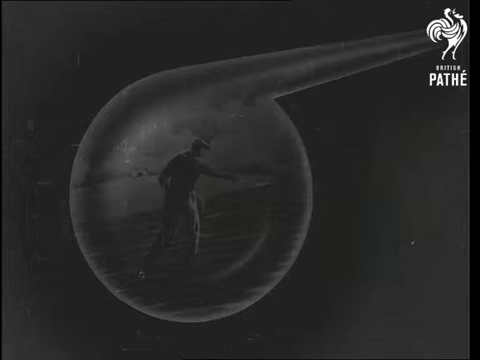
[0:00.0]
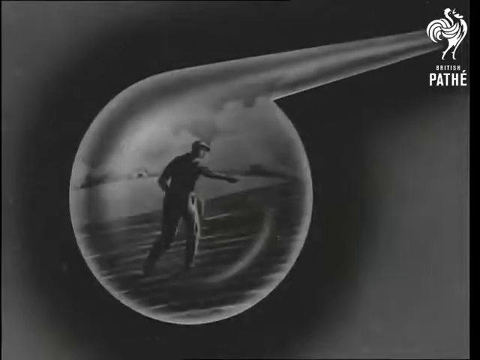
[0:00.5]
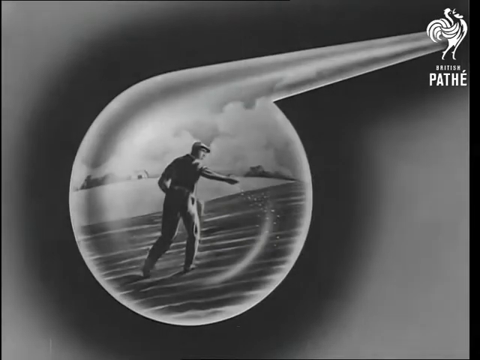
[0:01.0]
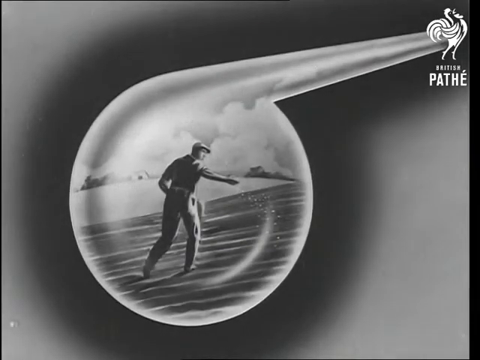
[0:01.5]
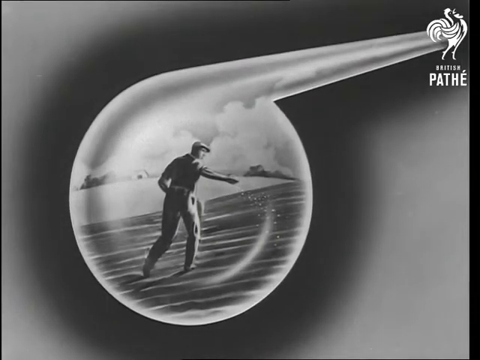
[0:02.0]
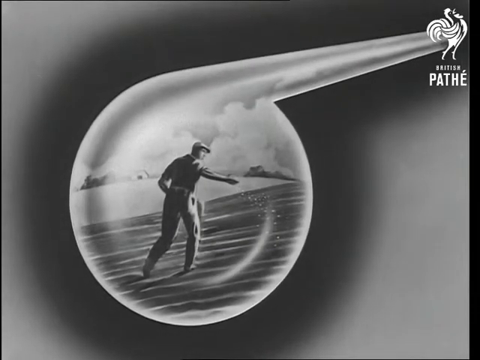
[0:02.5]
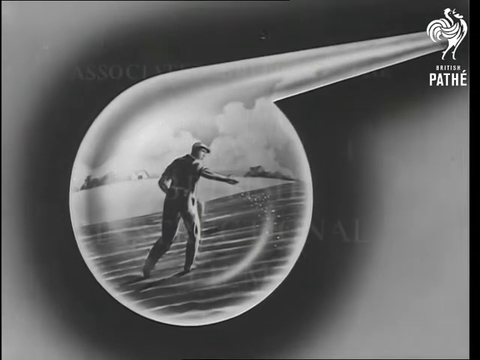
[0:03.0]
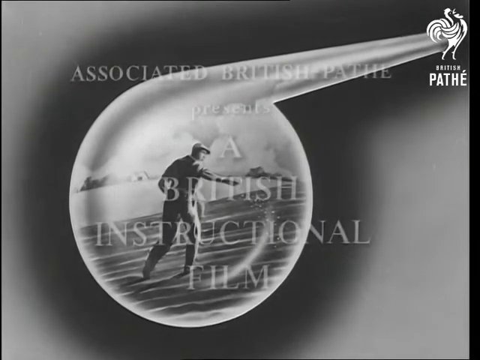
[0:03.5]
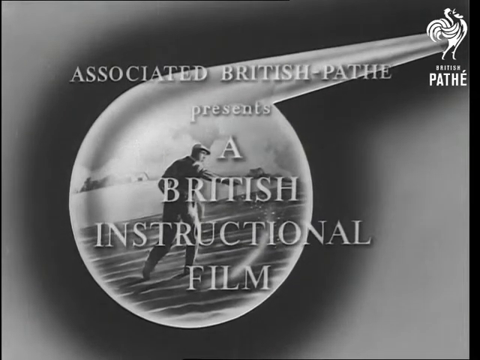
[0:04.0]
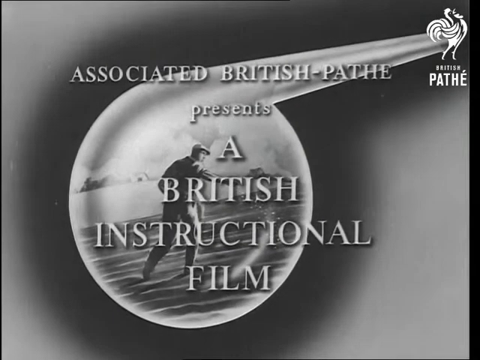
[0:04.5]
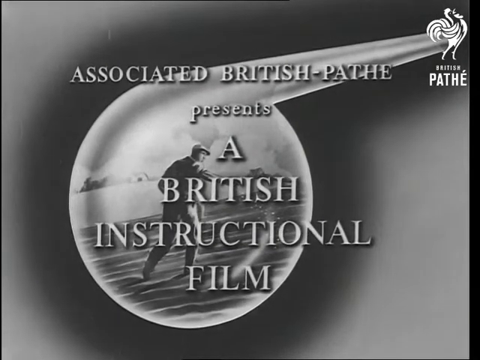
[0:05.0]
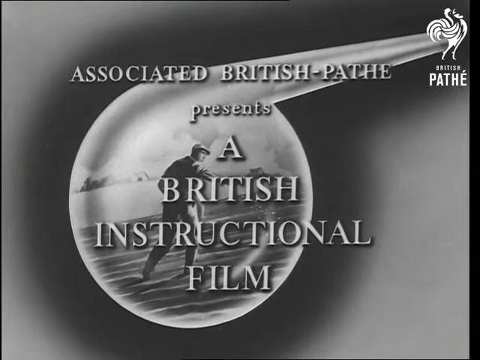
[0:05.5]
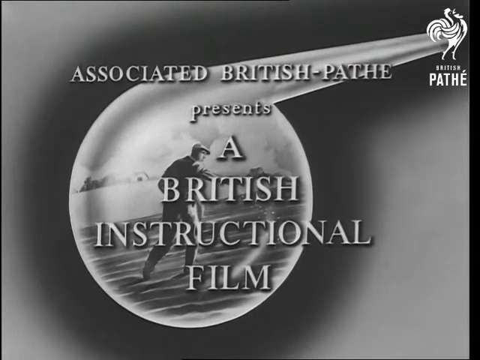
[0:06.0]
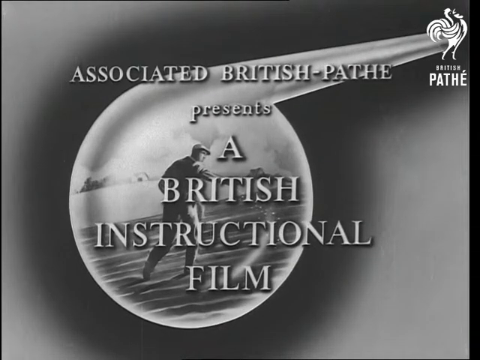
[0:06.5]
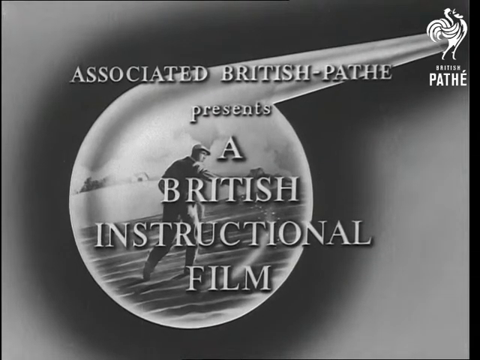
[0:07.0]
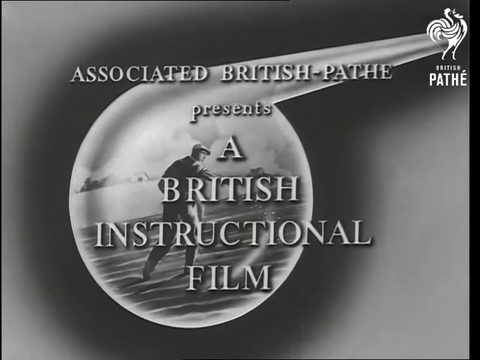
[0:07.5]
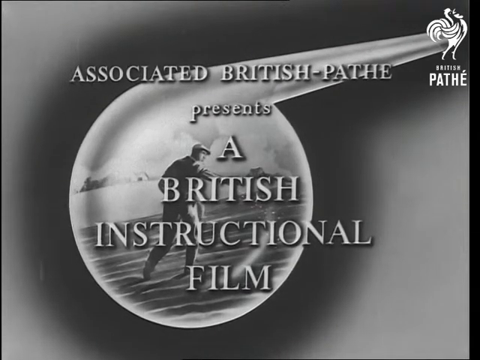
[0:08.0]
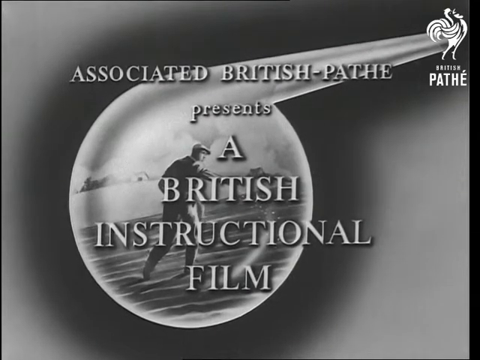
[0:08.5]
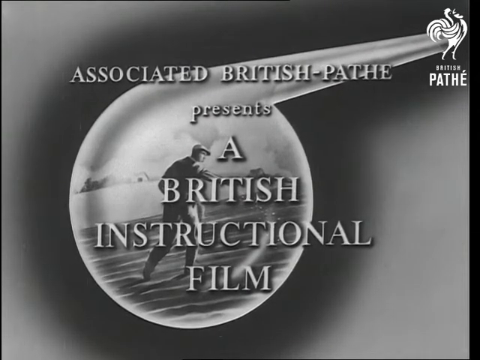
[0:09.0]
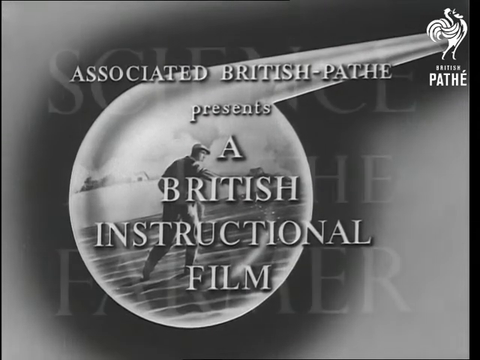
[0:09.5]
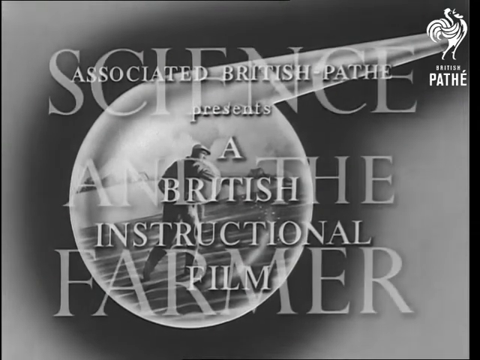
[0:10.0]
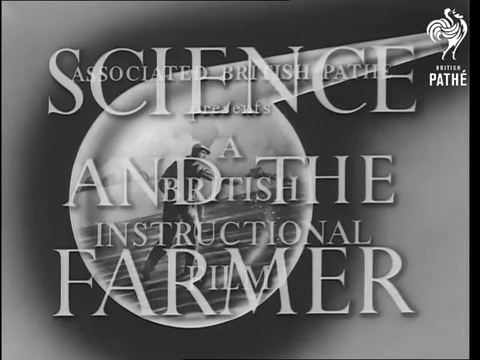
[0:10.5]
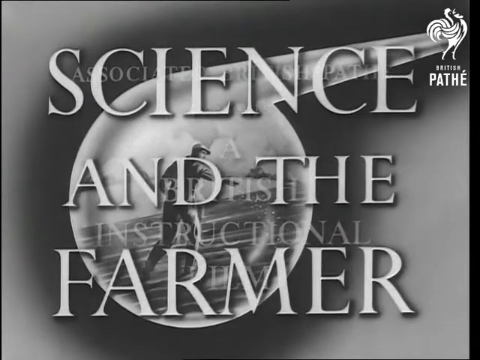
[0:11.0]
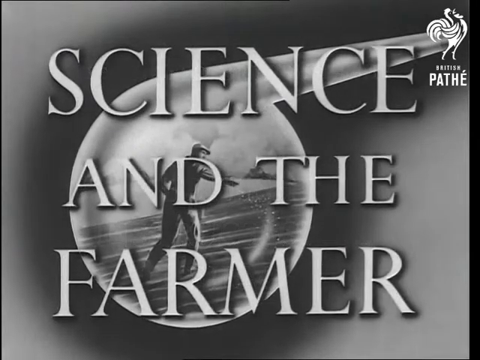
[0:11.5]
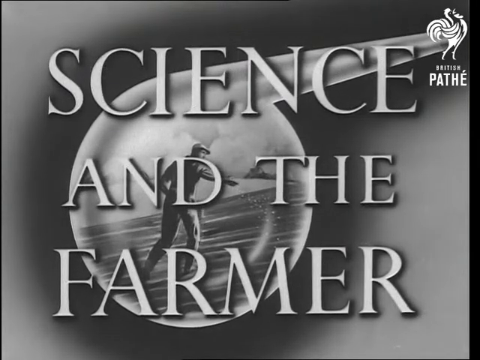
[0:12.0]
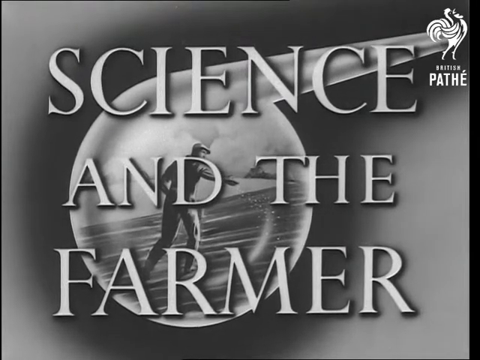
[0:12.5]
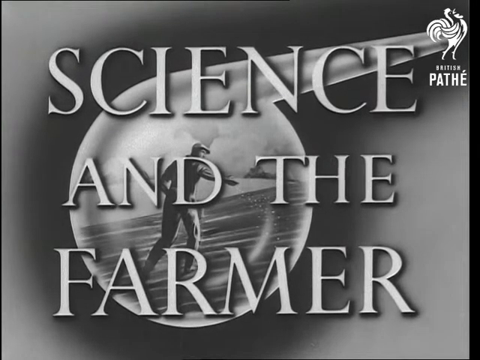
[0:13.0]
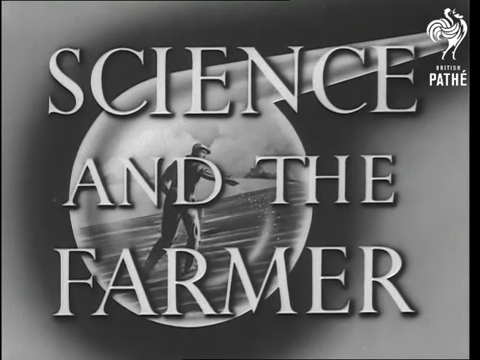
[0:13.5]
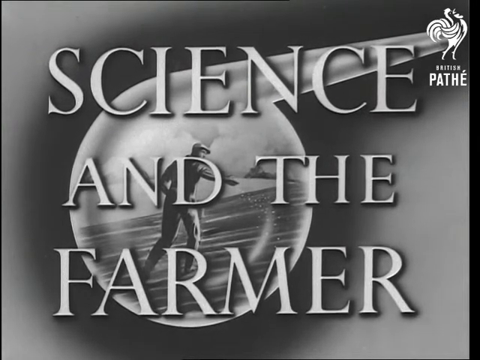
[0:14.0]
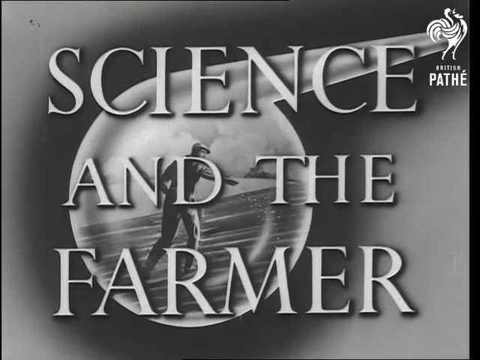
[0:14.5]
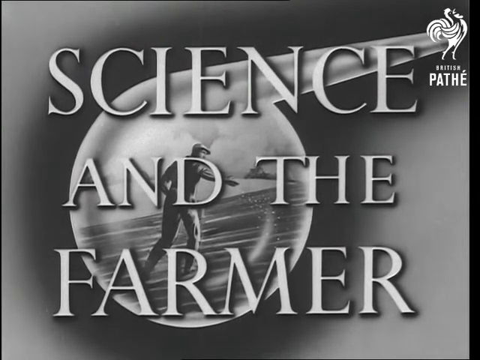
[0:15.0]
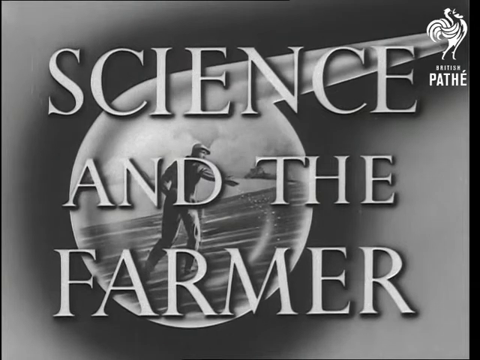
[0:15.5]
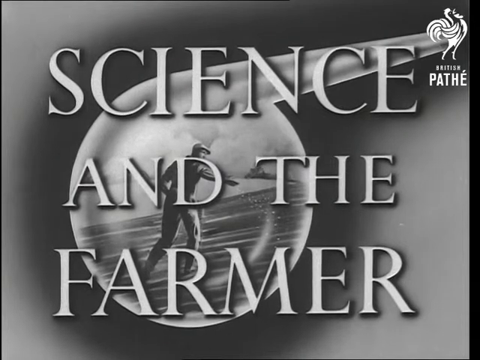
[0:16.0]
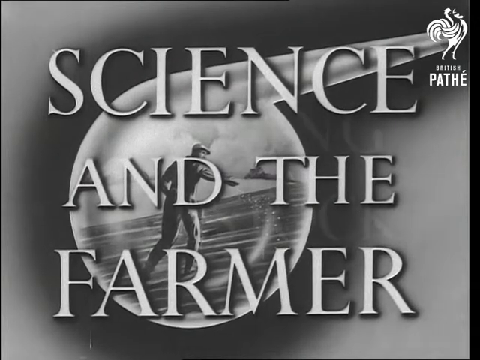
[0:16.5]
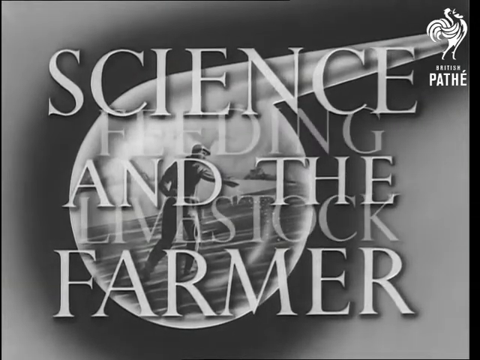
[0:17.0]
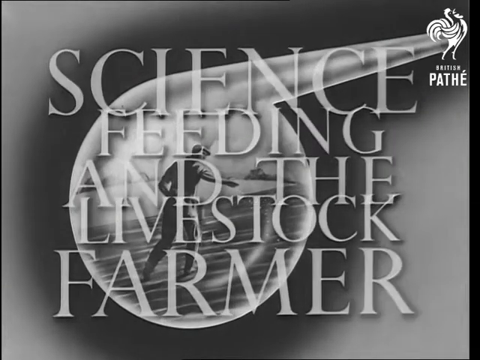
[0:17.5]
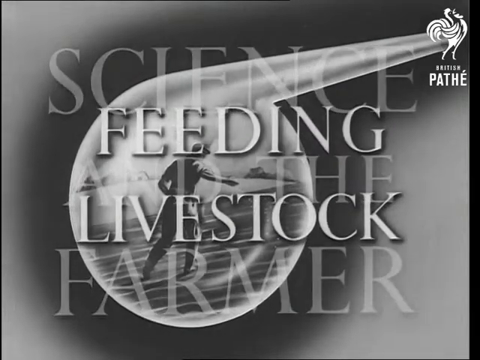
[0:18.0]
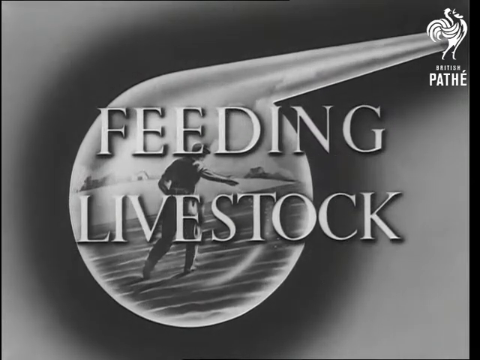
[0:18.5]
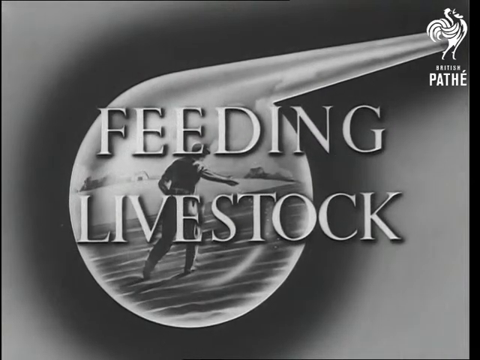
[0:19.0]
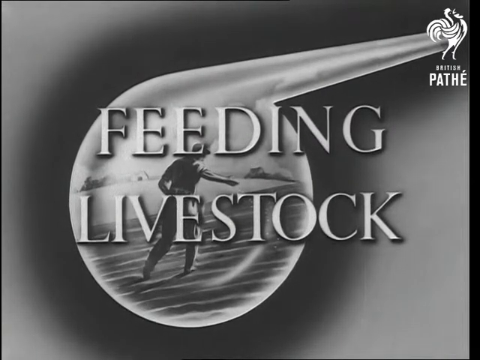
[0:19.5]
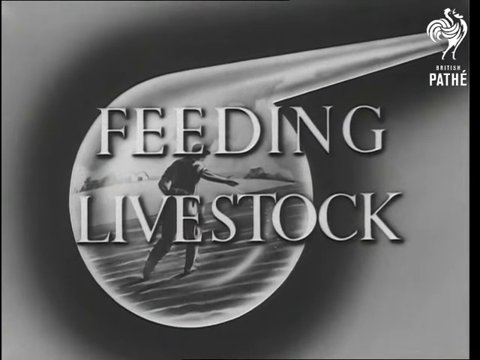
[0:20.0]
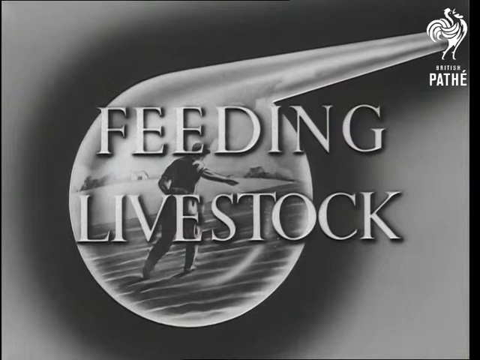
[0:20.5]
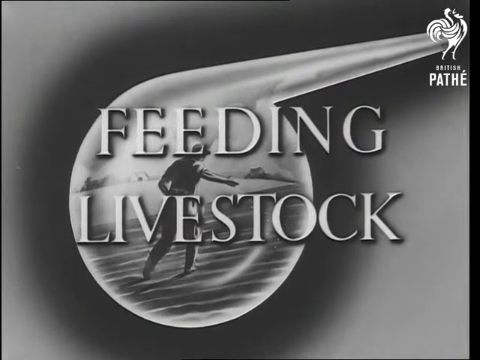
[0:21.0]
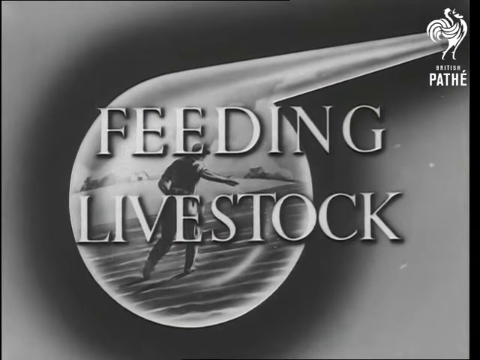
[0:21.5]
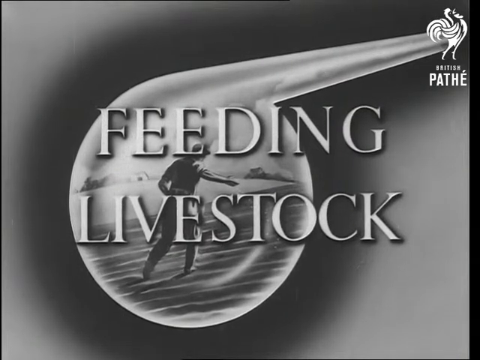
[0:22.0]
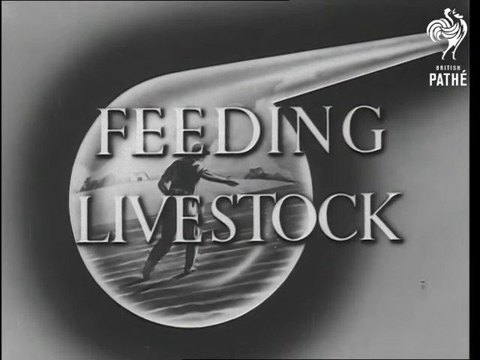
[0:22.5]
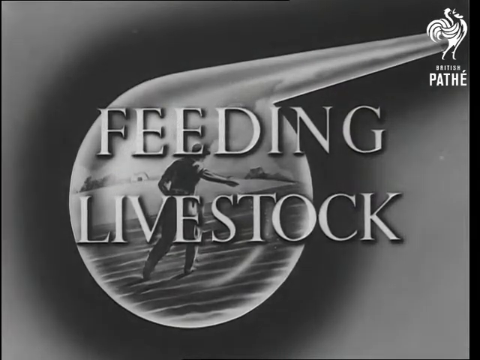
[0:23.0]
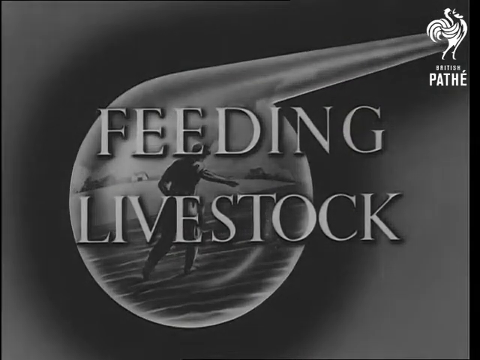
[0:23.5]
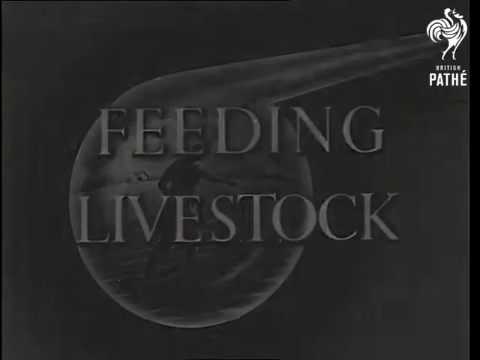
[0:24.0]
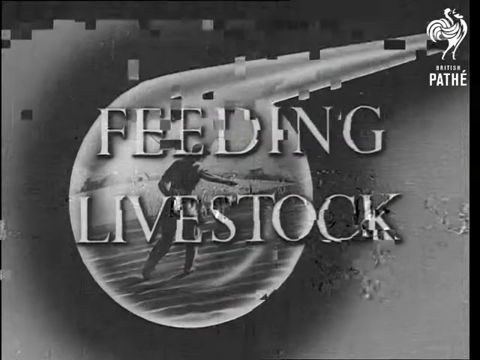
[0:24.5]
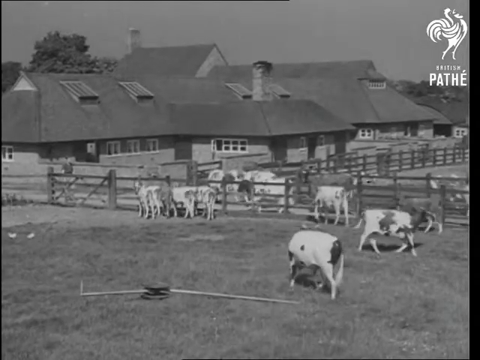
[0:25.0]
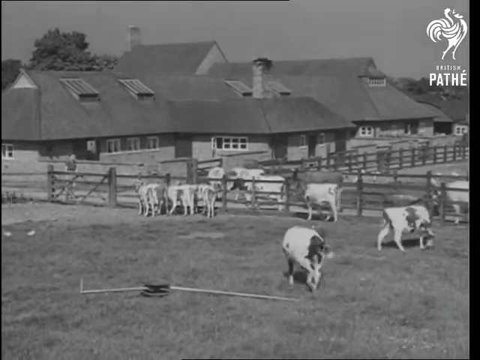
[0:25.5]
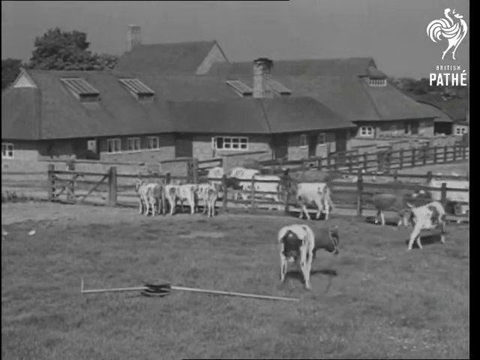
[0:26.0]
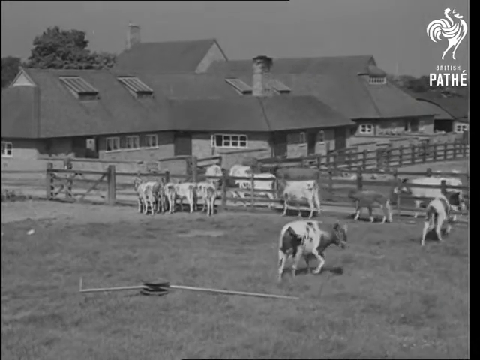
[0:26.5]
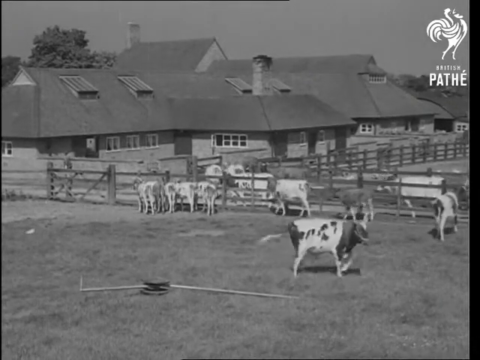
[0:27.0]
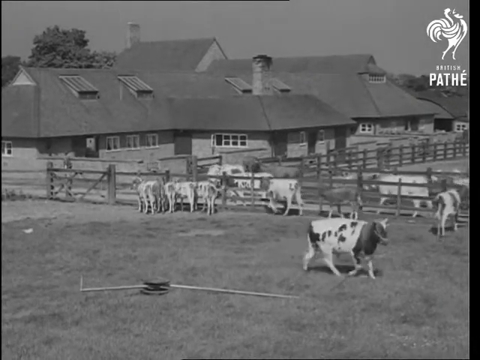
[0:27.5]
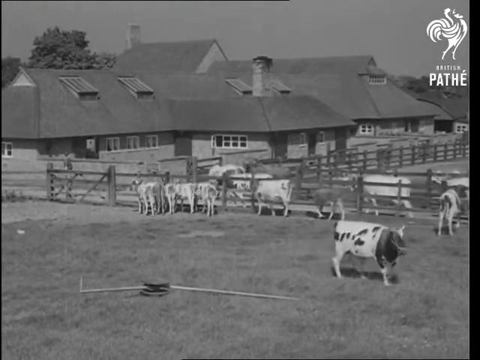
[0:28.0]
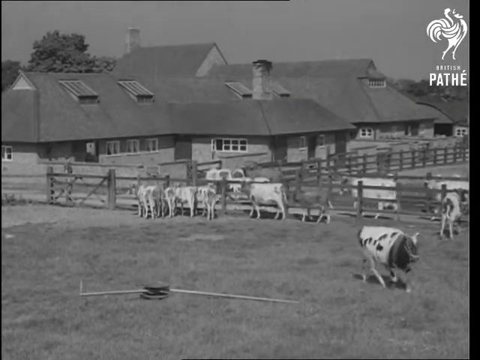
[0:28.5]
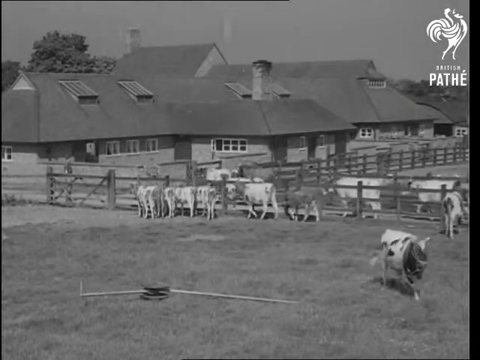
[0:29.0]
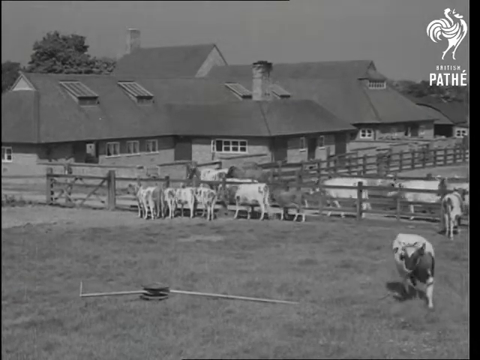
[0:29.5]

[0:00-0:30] A black and white image shows a farmer throwing seeds. In the bottom right there is a white chicken or rooster, like a digital print, with "British Pathé" in white beneath it. The look is very old, possibly from the 1930s, not modern. White text appears on the screen reading "Associated British Pathé presents a British instructional film." The text then changes to "Science and the farmer," apparently the title, followed by "Feeding livestock." The image fades out into black and white footage of a farm, where cows walk around a fenced-in area with grass, and a large house or building is in the background.